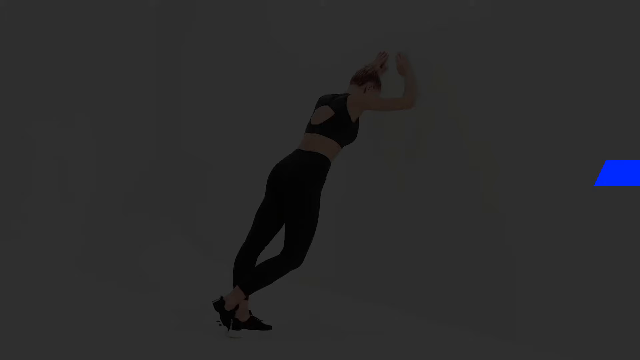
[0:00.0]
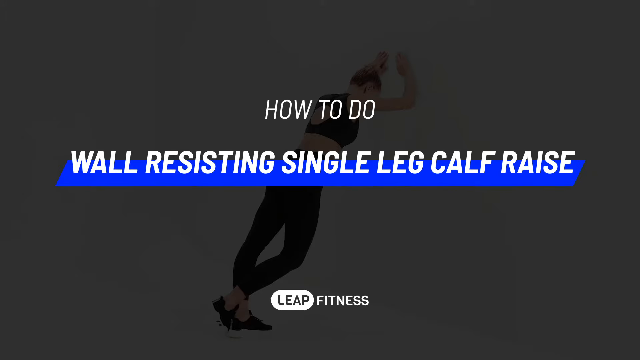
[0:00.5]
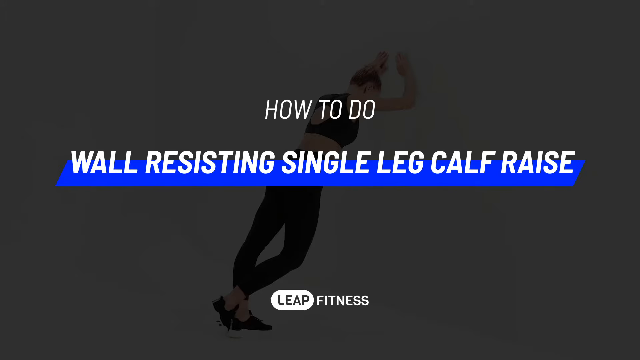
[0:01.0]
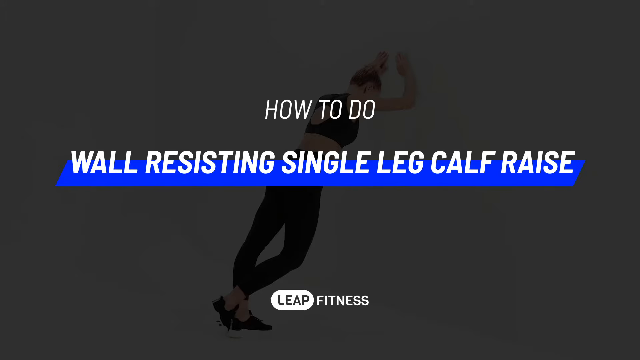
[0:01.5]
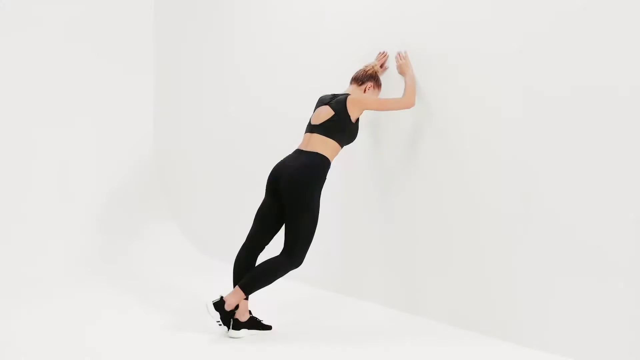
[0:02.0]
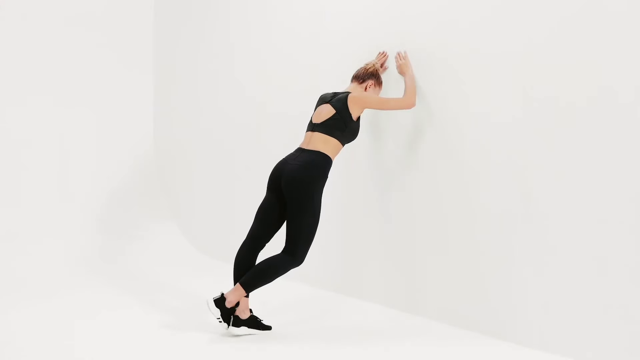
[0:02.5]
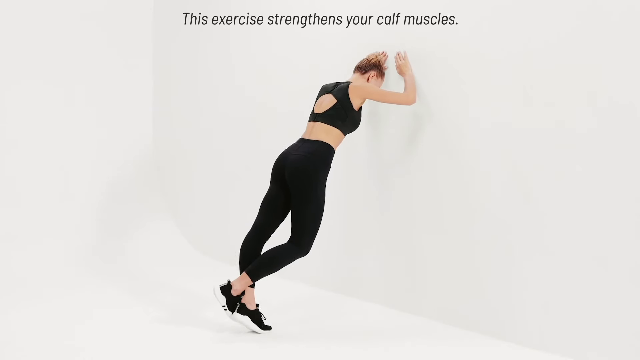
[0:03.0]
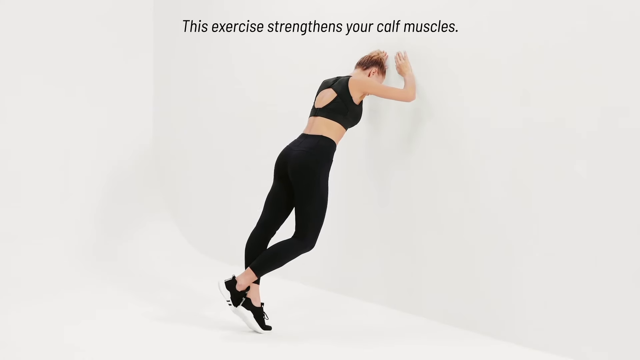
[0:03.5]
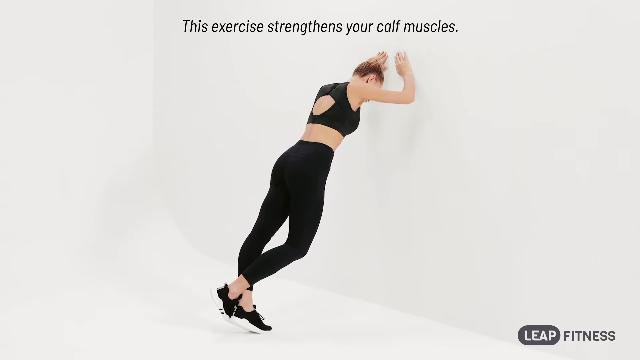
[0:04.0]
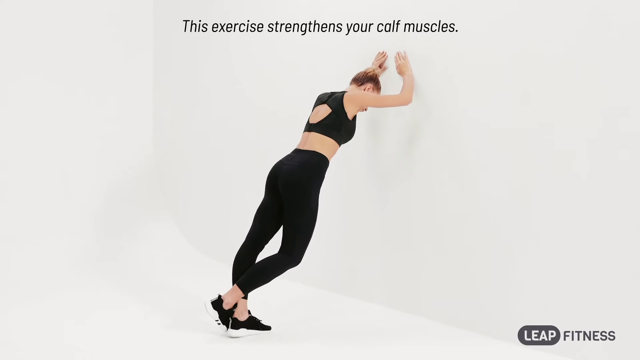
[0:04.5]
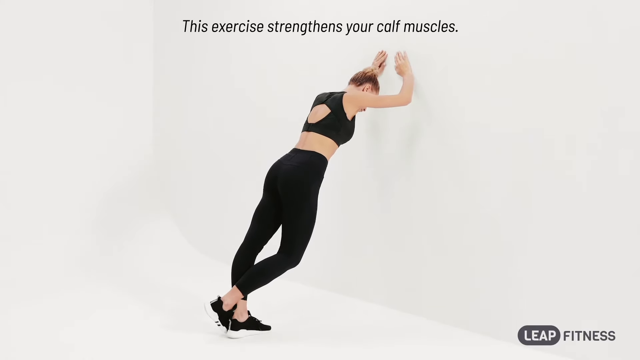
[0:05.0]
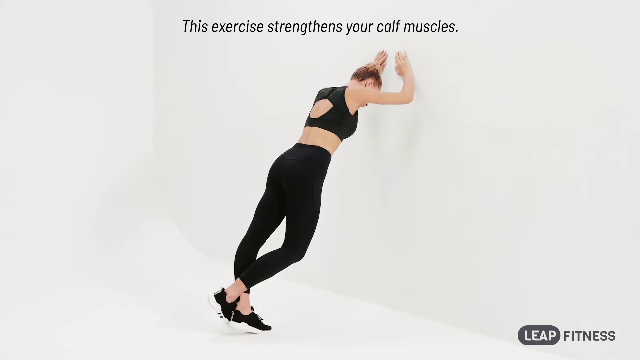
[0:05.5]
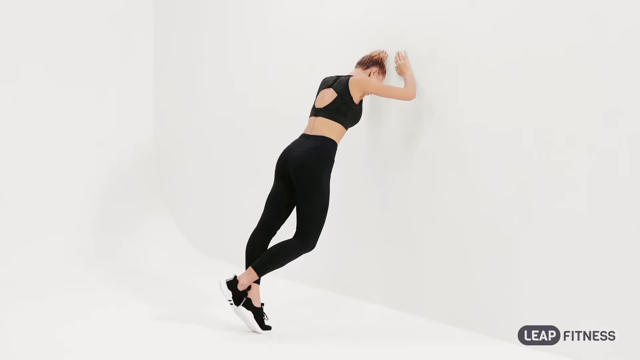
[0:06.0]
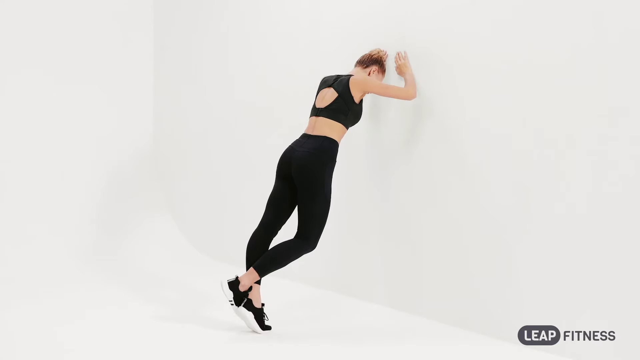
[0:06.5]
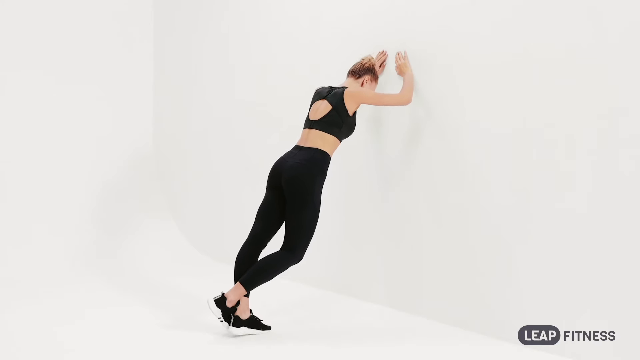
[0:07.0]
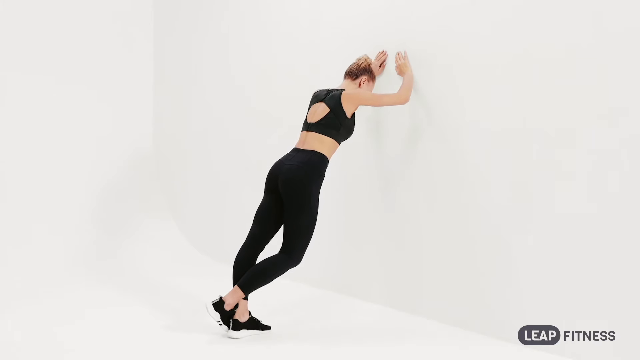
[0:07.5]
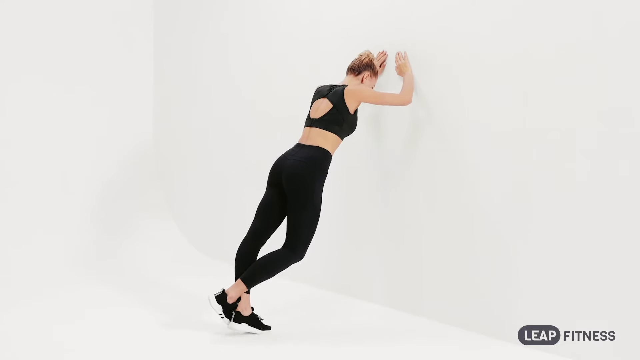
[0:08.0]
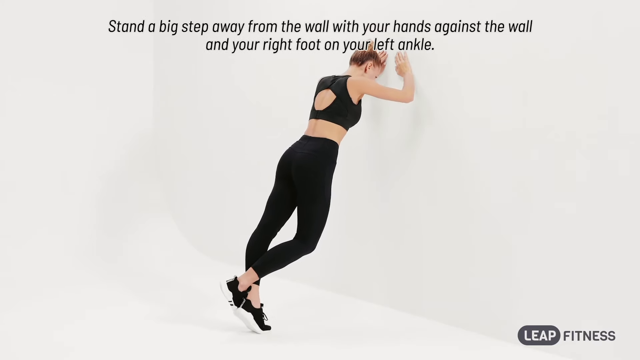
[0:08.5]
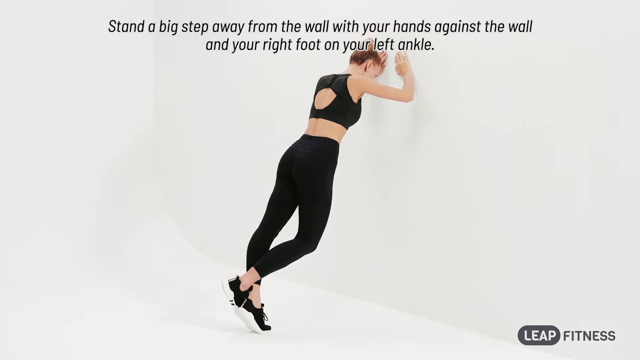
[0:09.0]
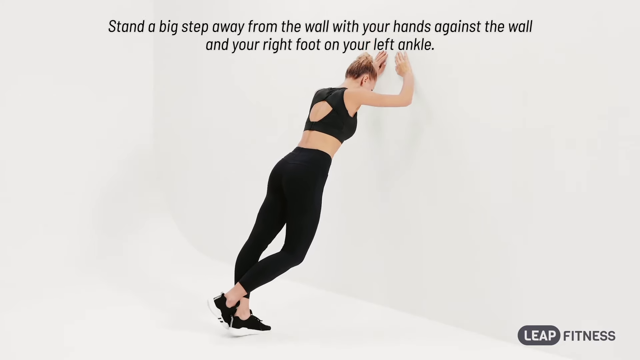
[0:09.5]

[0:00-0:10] A woman in the background appears to be leaning against a wall doing some type of fitness workout. On-screen text reads "how to do wall resisting single leg calf raise." She is demonstrating the single leg calf raise: leaning against the wall, she has only one foot on the floor while her other foot kind of rests on the back of her ankle. At the top of the screen, text reads "this exercise strengthens your calf muscles." Pushing up off the ground with the one foot, she slowly lifts her entire body up into the air, working her calf muscle.